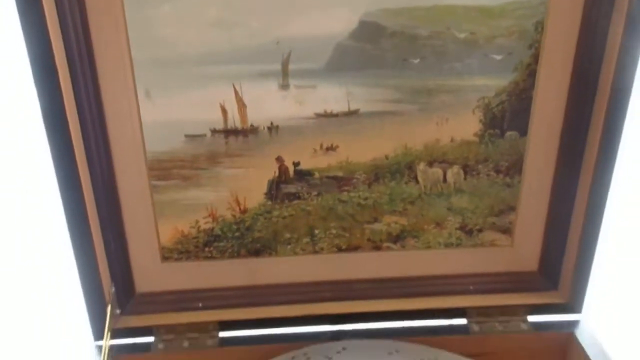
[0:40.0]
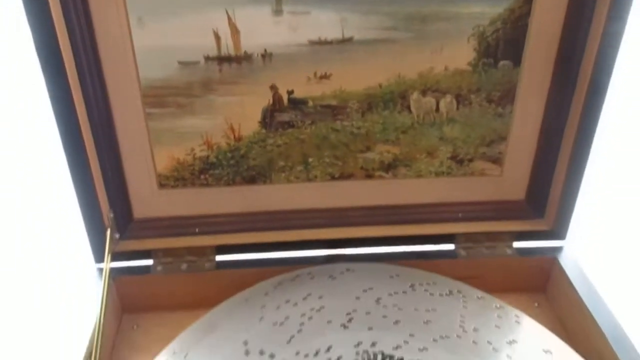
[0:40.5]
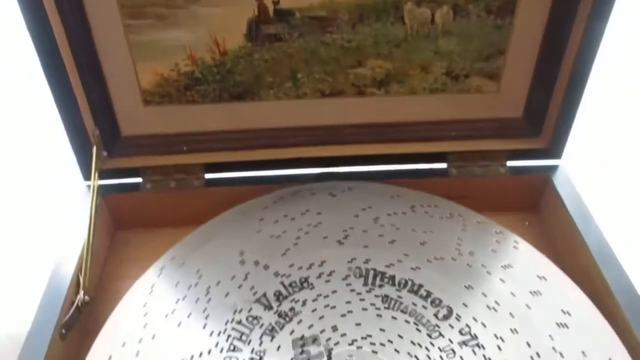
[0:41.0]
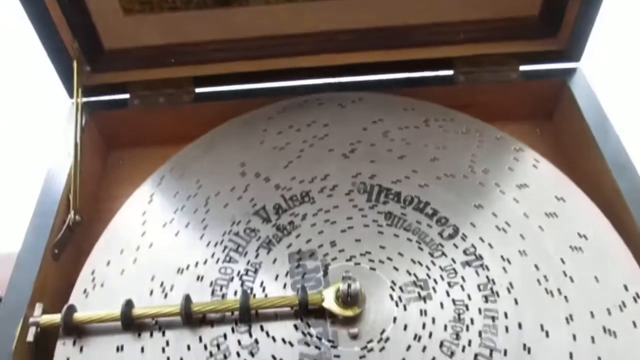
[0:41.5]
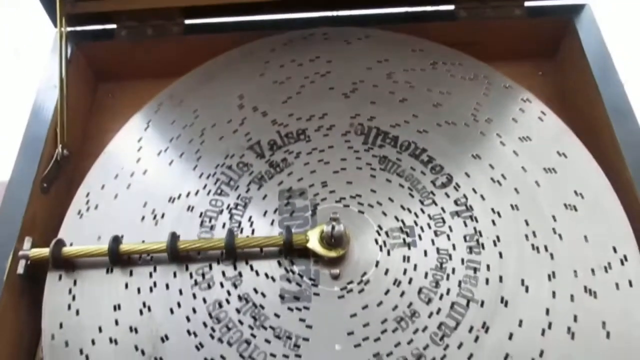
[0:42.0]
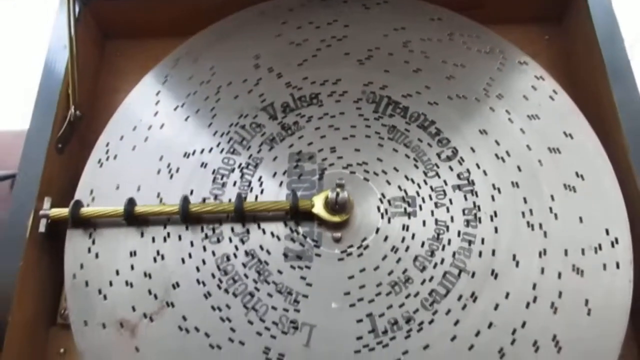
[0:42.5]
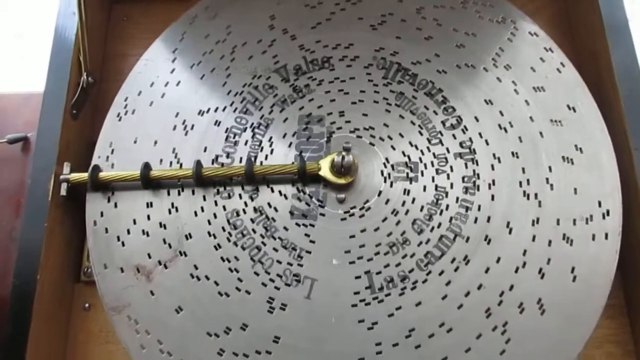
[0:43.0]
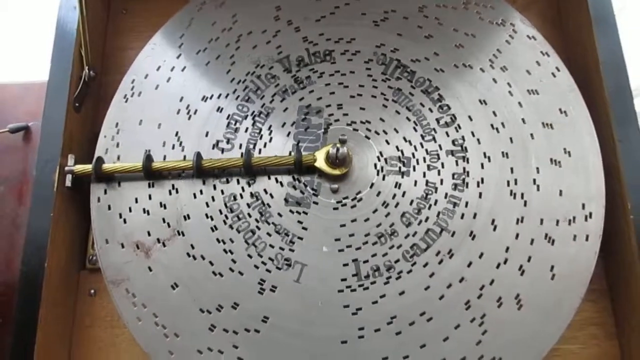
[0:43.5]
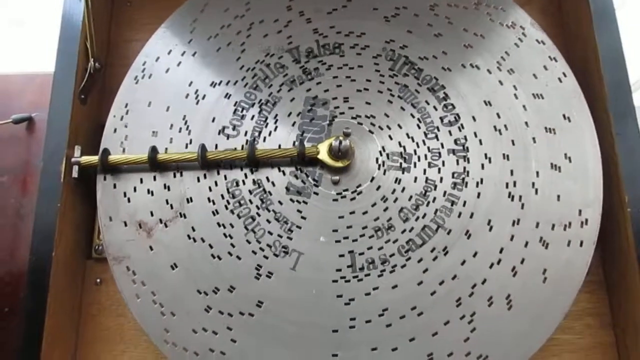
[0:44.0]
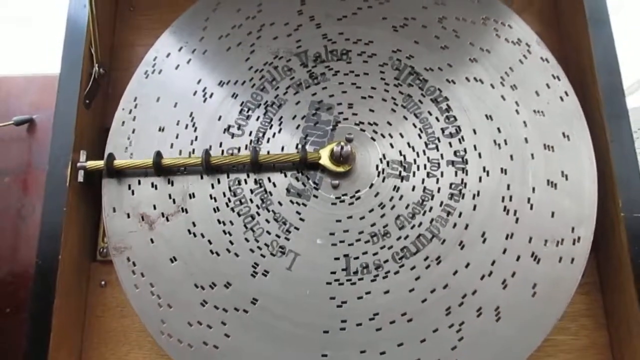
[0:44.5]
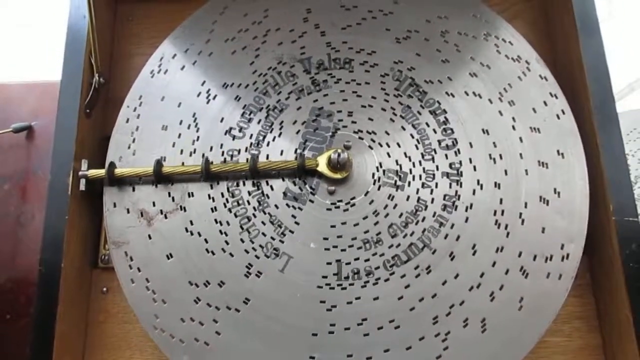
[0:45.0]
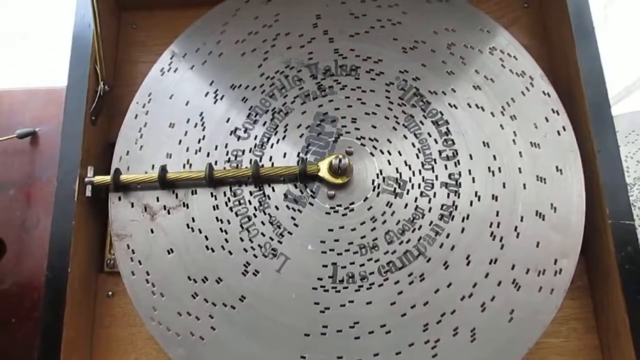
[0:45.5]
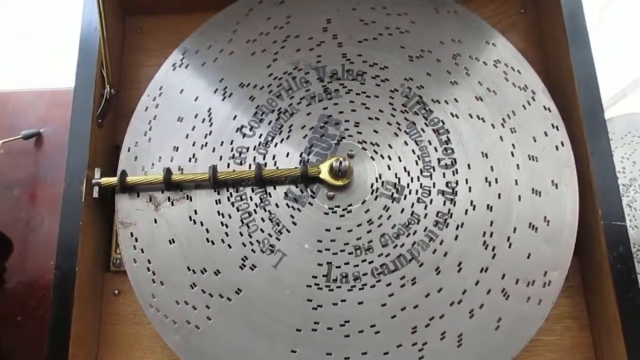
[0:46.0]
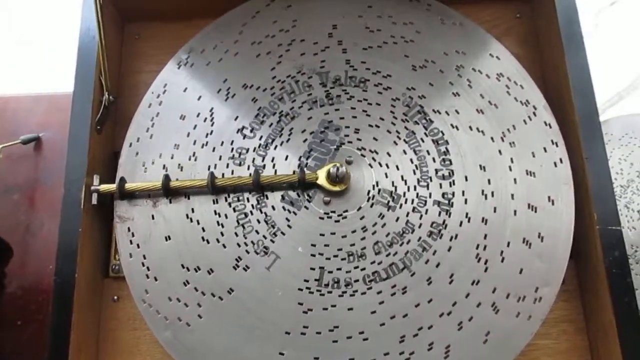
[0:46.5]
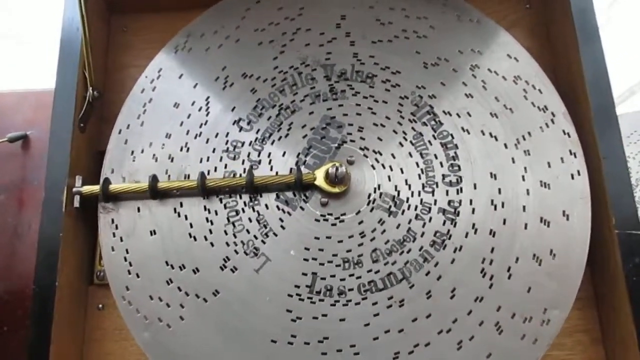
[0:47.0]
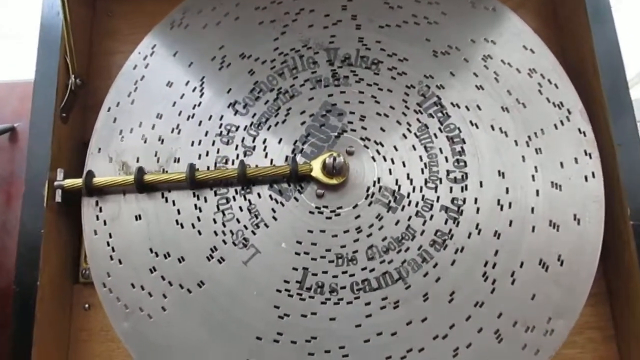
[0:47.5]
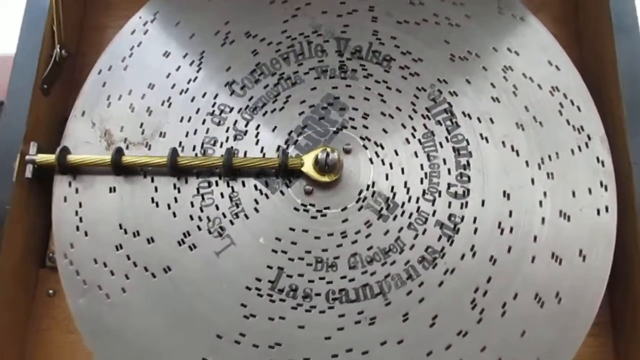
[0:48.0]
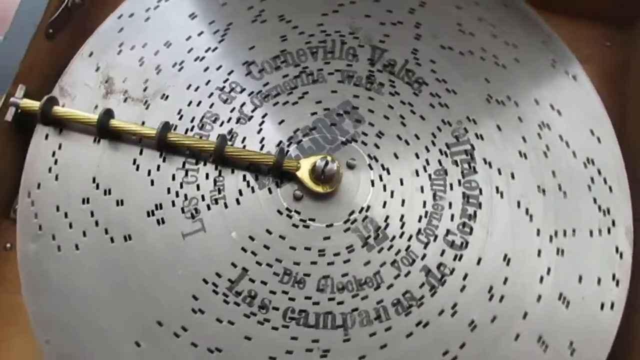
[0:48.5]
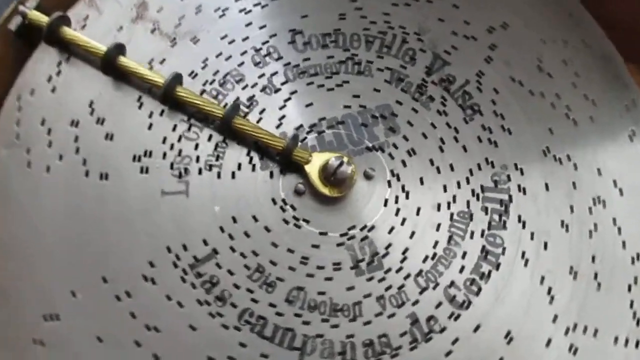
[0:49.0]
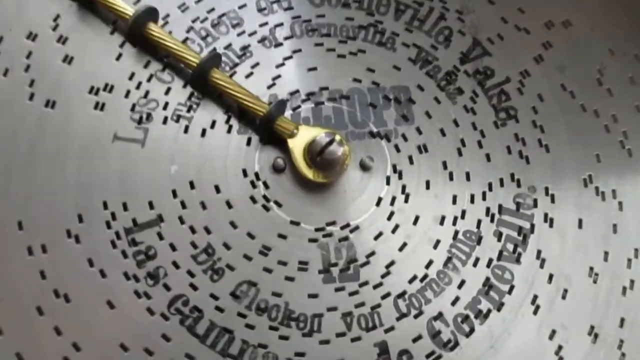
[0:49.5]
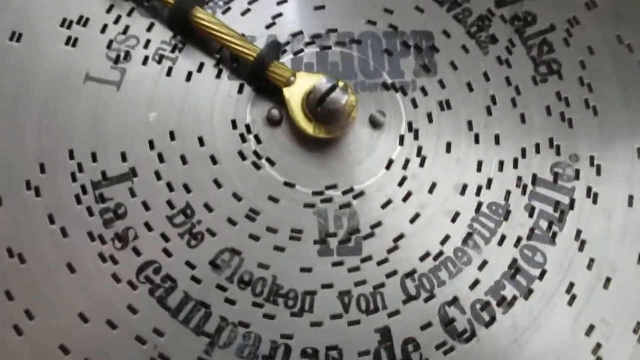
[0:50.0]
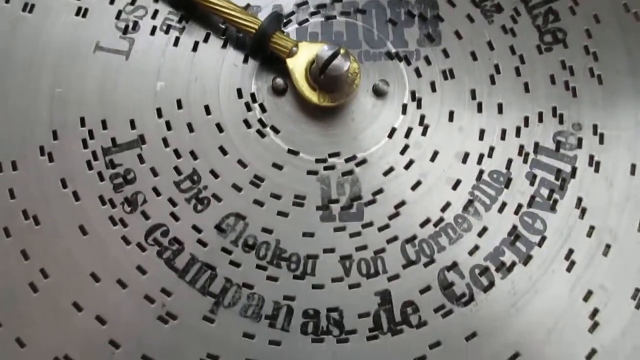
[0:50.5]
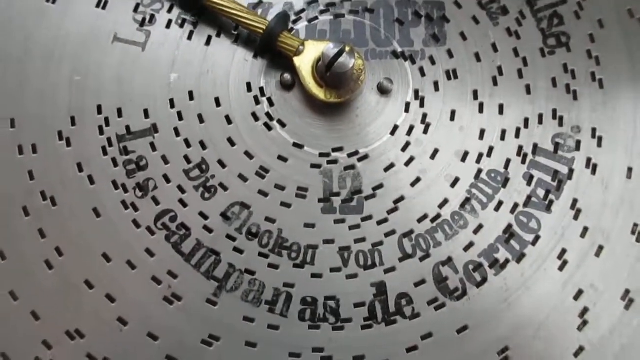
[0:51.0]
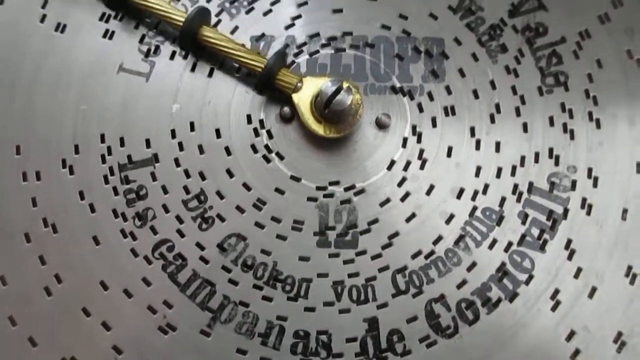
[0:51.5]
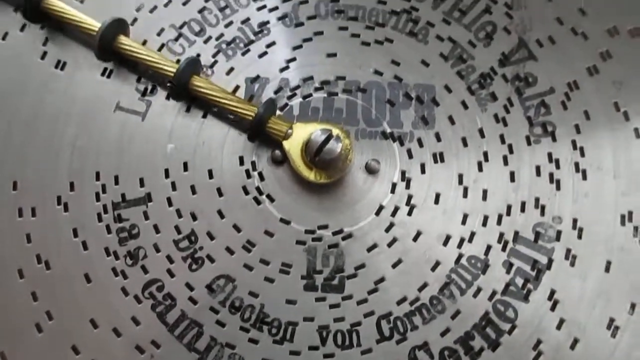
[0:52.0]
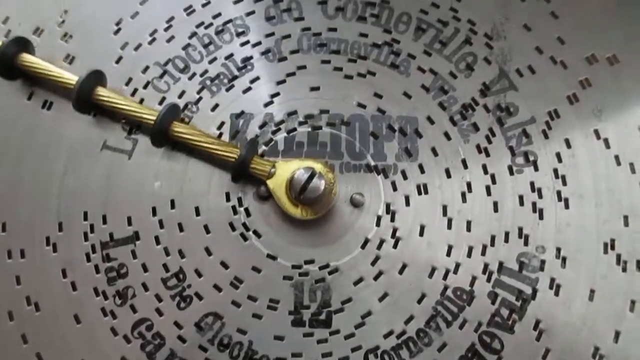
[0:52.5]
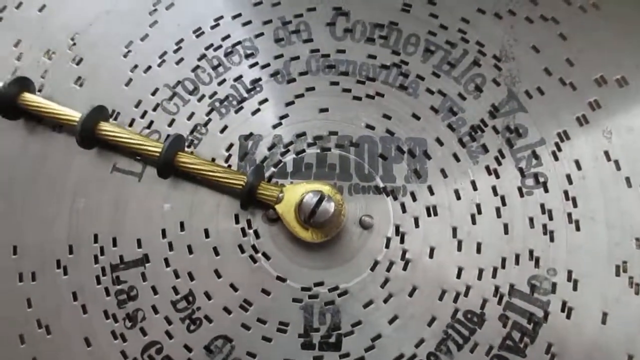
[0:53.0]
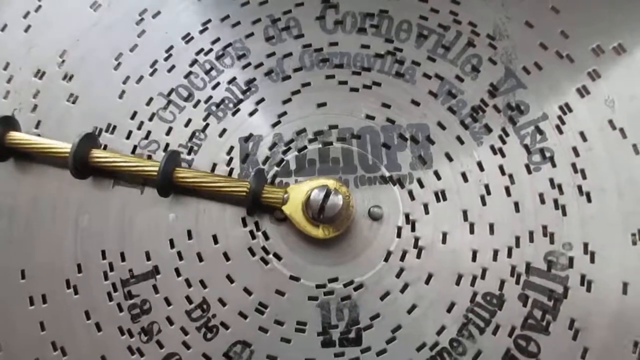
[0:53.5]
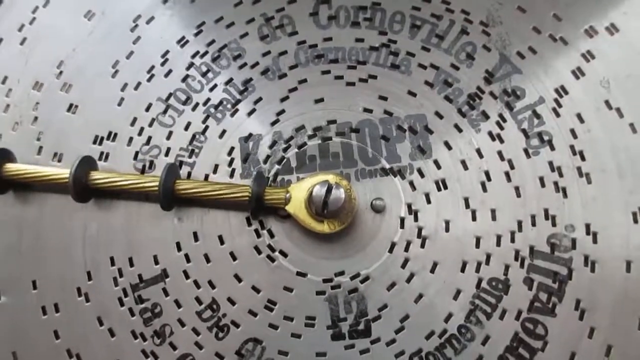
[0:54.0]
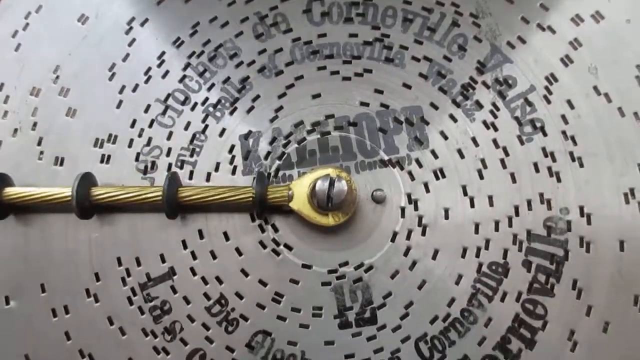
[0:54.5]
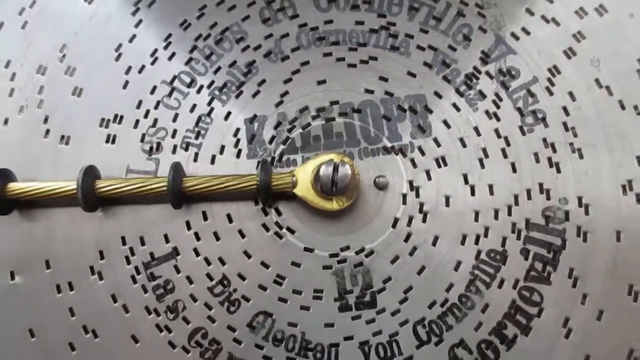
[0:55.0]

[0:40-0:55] A painting on the inside of the box's lid is shown: on a tan backdrop with a brown exterior wooden frame, it depicts a beach scene with sand and a little bit of water. A kid sits with his dog in the grass before the sand starts, some animals run through the grass, and a cliffside is off in the distance. As the camera pans back, a gold hinge holding the lid open comes into view, and the camera pulls back to reveal a record player. It holds a silver steel record with various pinholes throughout it to give it its sound. A gold-colored rod arm is attached on the left-hand side of the box and at the center of the record player. Five black metallic circles go around the cylinder portion of the rod, spaced rather equally down it, and roll across the surface of the metal record to play the sound.